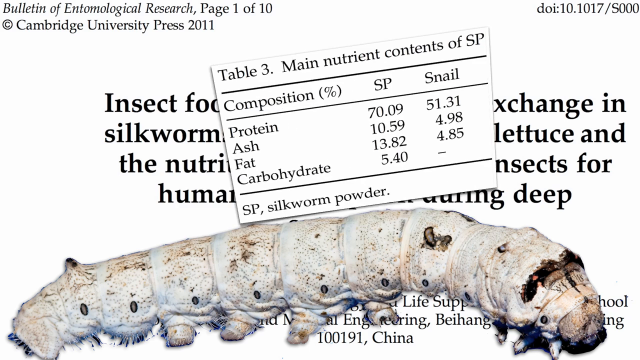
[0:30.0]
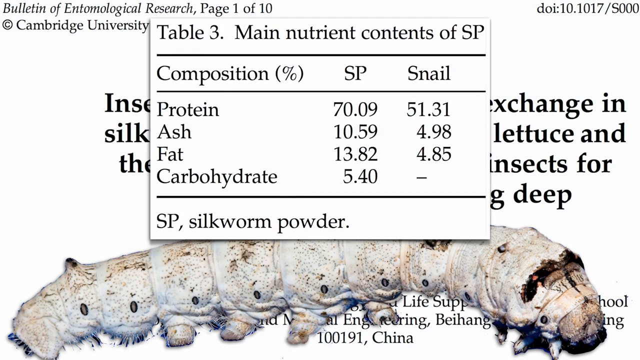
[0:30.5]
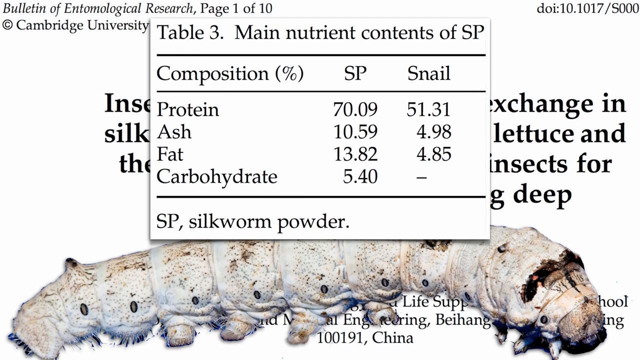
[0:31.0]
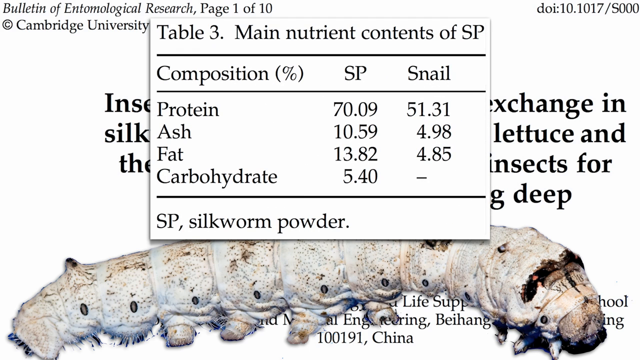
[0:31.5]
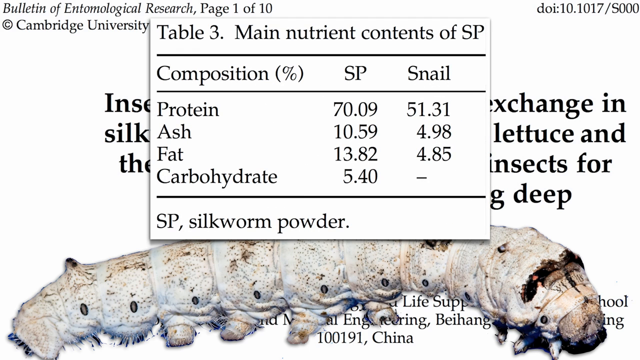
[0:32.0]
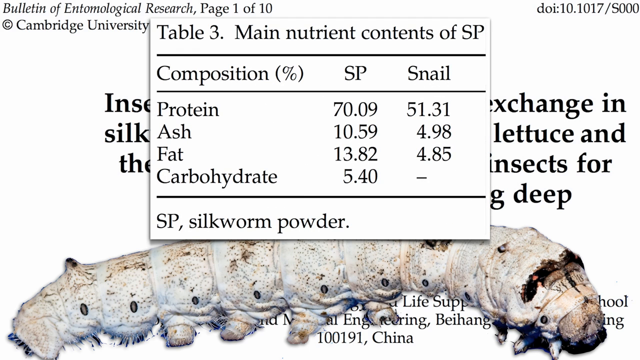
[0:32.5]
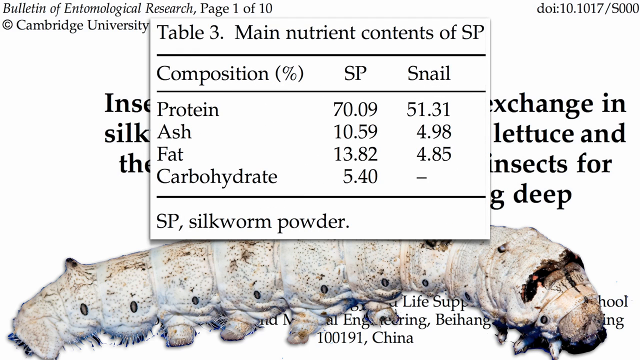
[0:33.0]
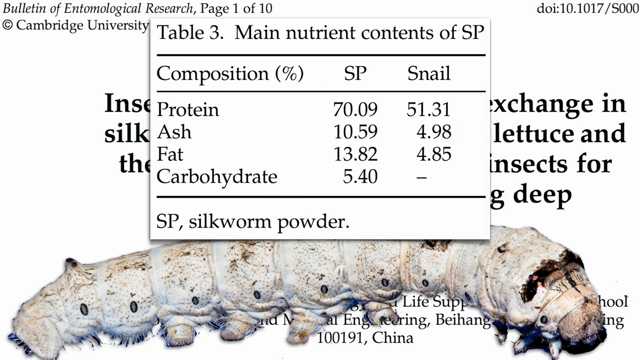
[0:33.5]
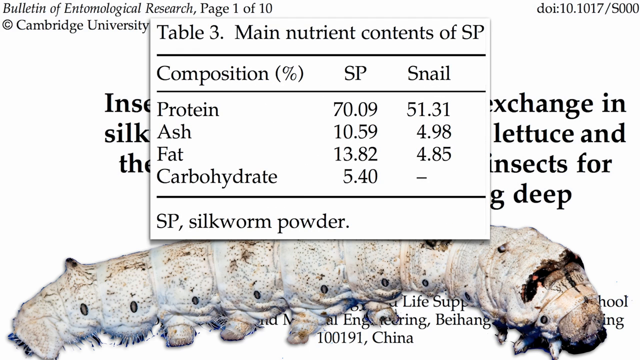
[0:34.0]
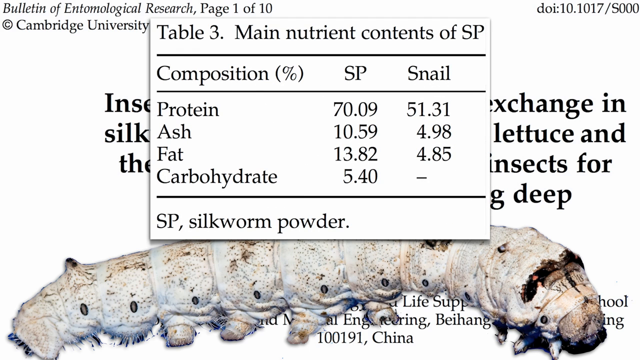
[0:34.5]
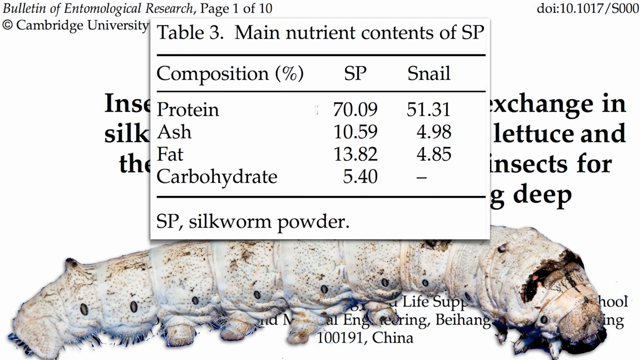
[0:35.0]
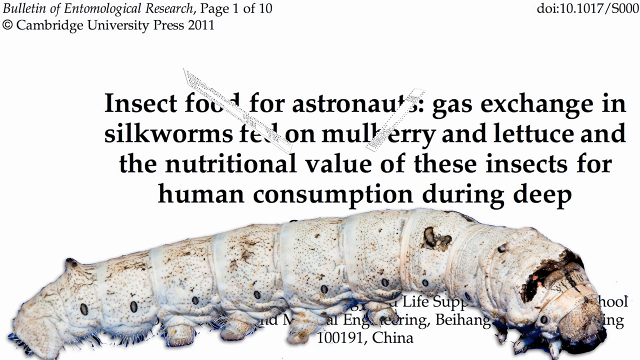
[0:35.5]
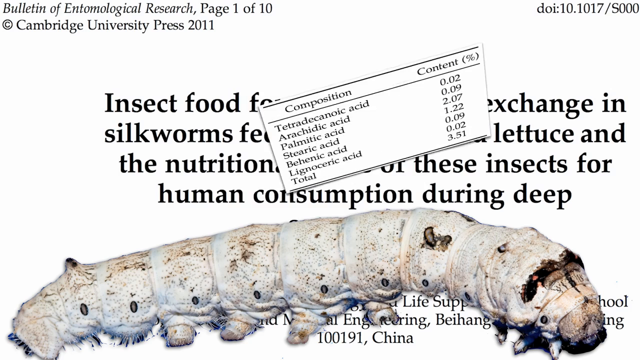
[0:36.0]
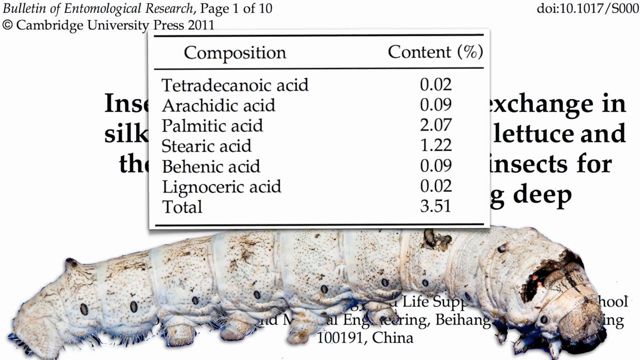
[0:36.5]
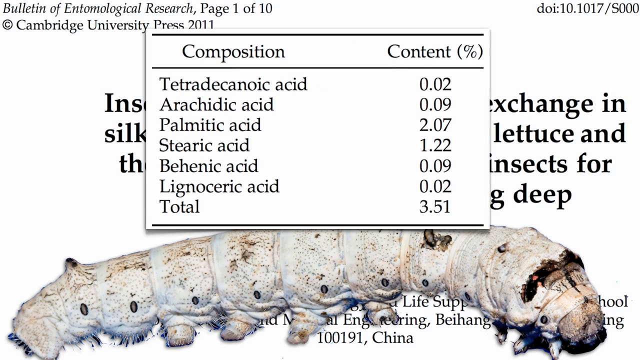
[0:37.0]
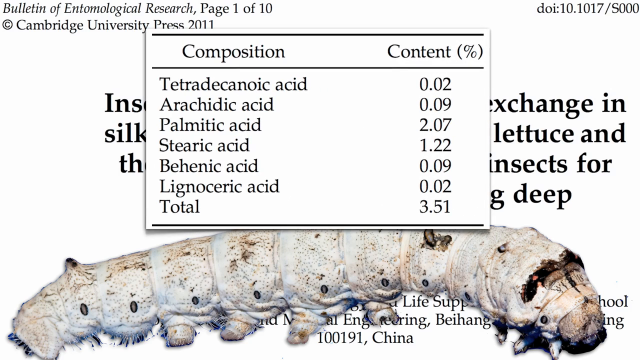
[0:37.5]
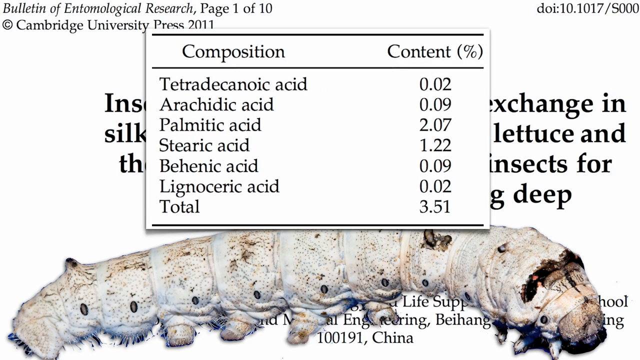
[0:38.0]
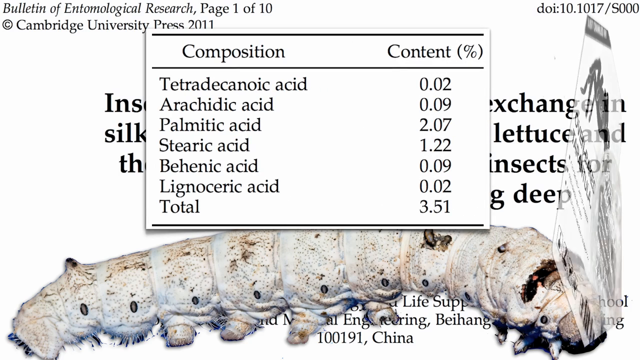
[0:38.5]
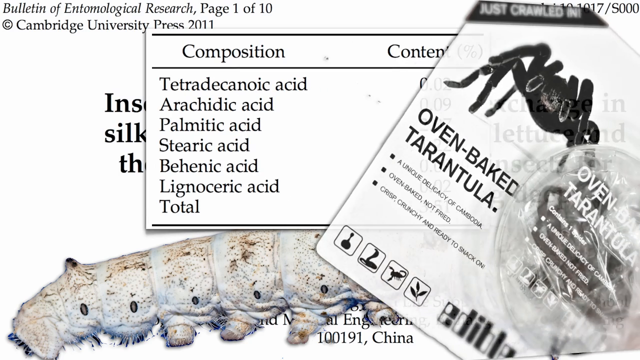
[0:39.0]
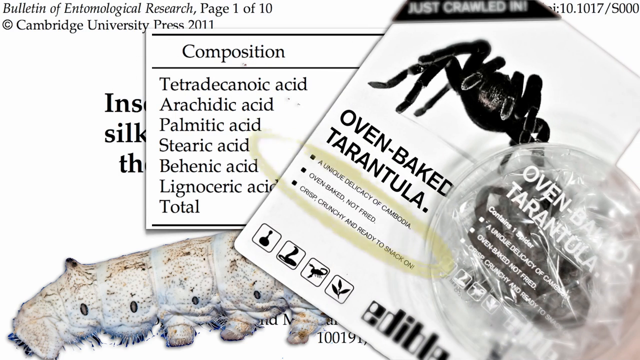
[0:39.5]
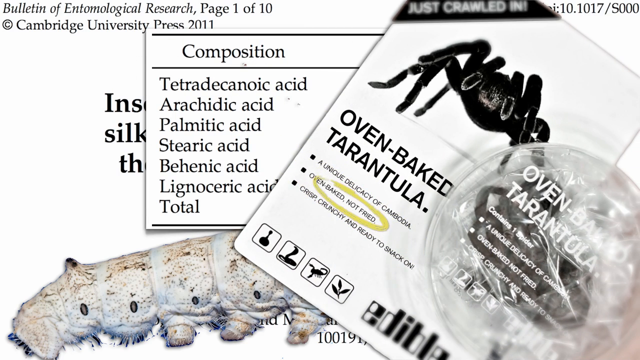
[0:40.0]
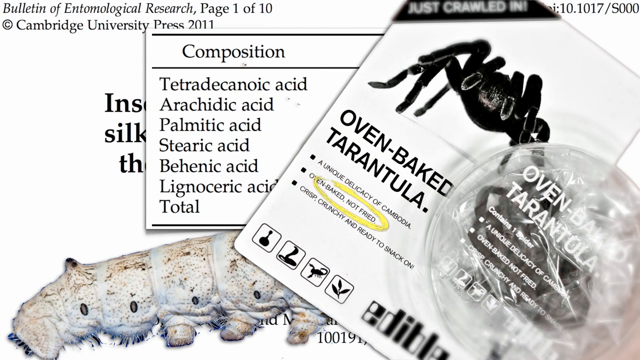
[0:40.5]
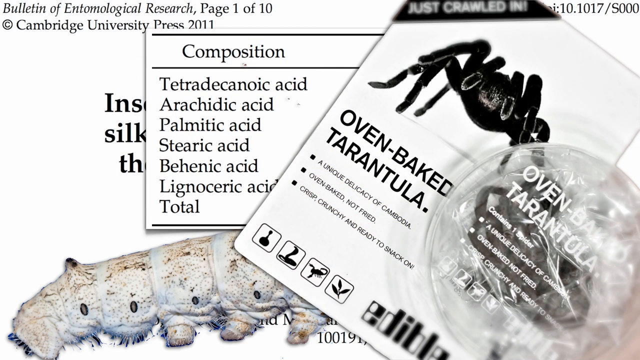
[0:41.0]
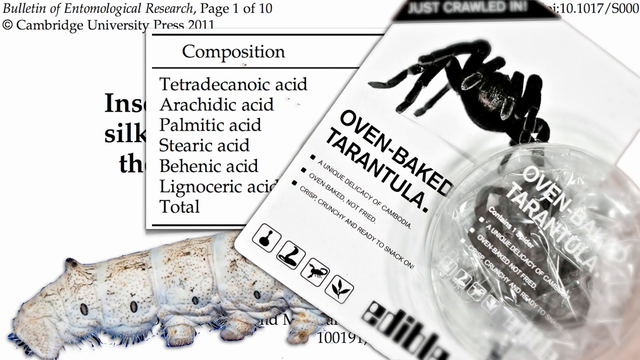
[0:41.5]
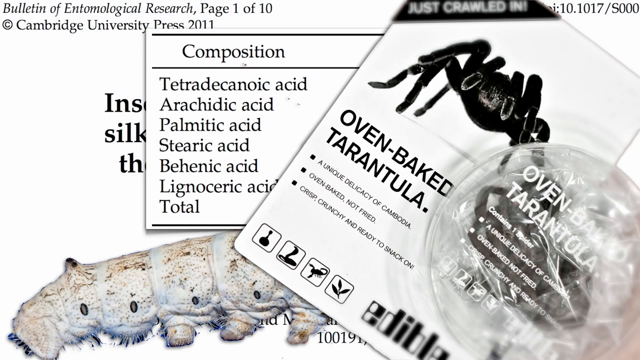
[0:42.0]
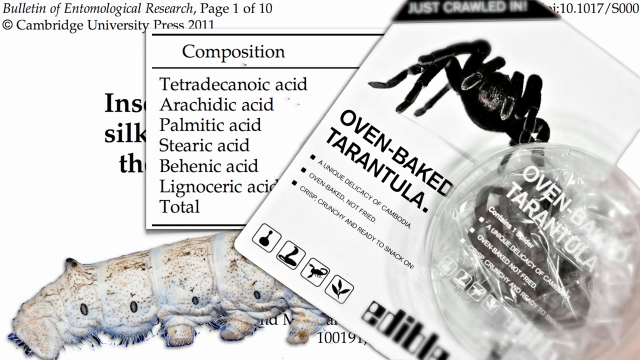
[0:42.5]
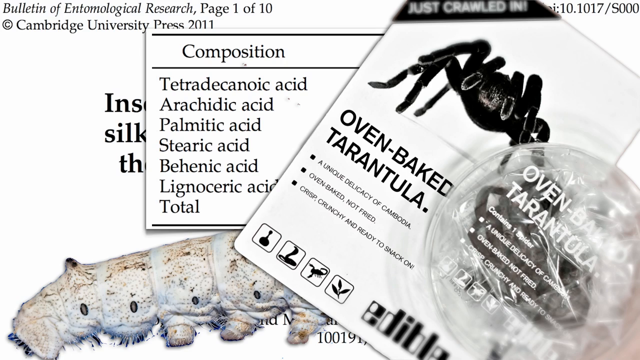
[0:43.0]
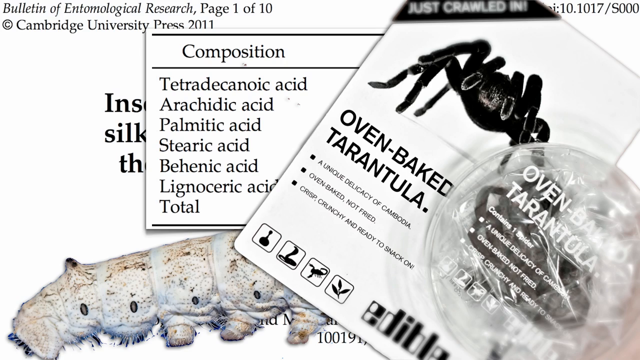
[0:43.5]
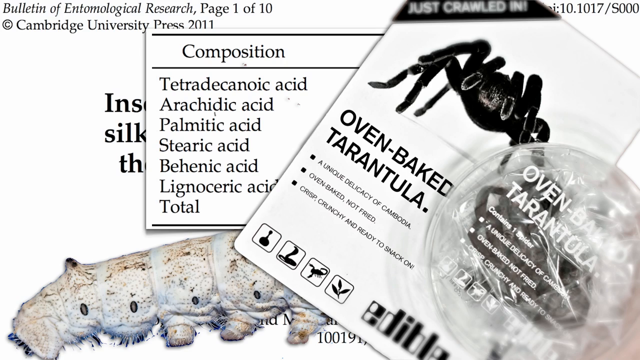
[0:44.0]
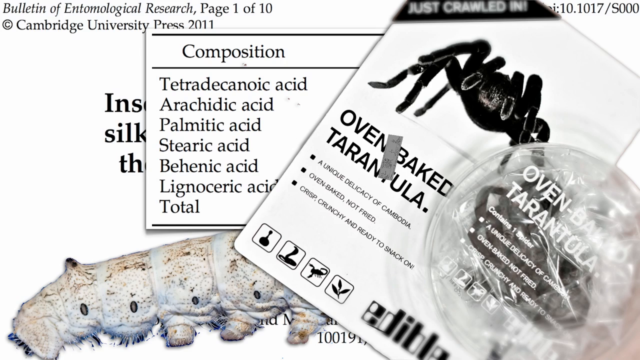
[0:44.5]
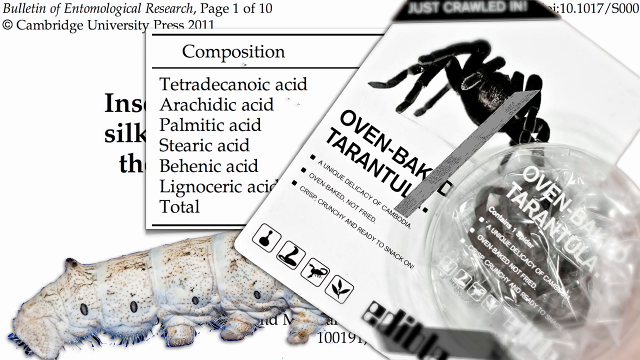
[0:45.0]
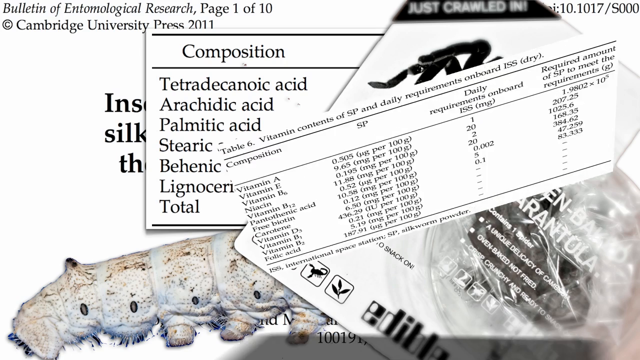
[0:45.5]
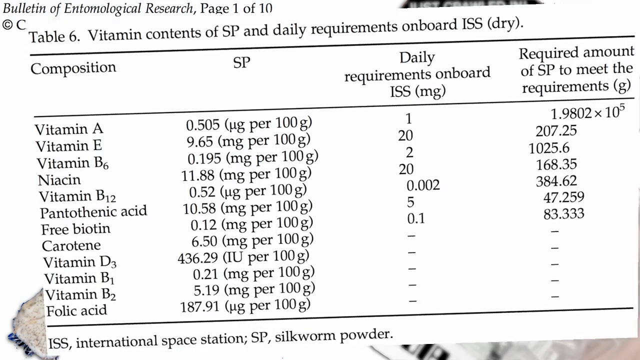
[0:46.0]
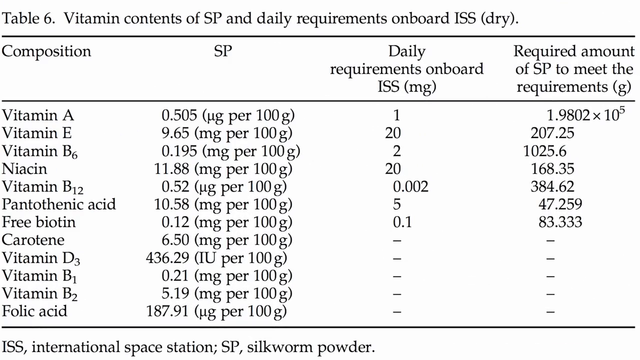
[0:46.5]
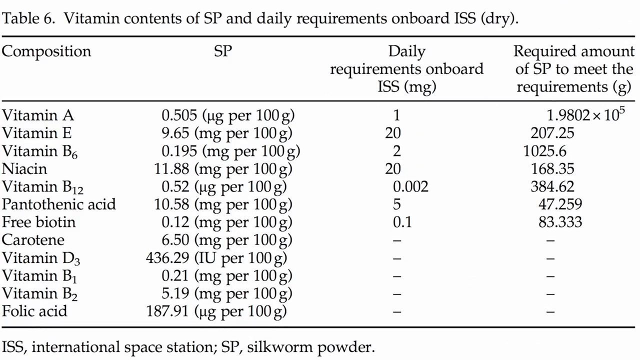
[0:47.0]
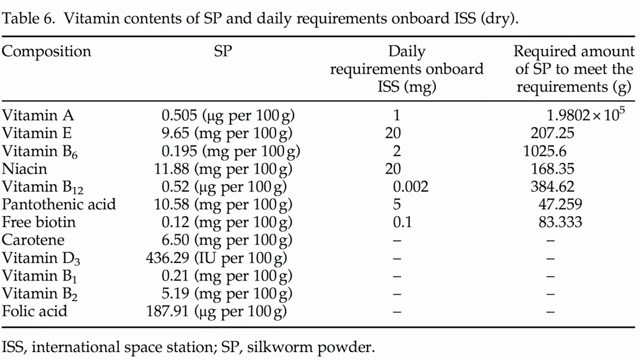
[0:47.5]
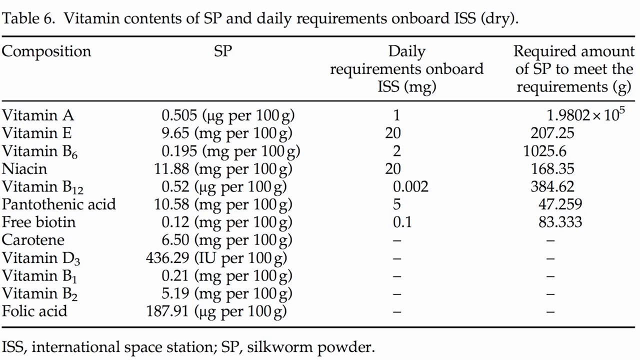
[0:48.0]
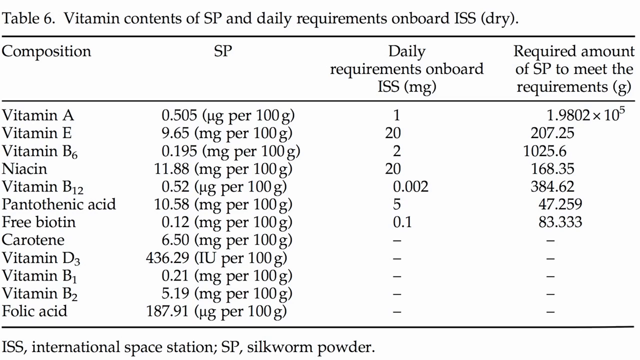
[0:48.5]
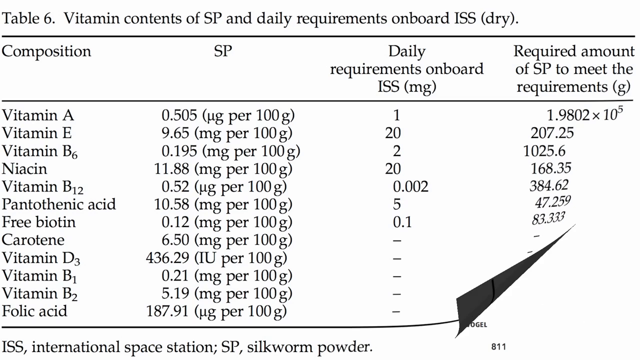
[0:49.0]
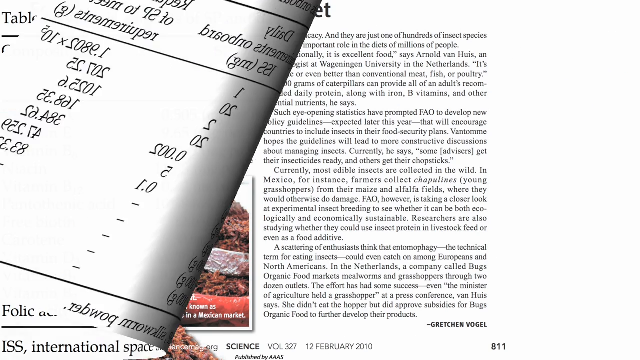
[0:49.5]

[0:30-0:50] The white background with text remains, with the white grub worm across the bottom, its head on the right side, stretching all the way across the page. A square comes up in the center with black text across the top reading "Table 3, Main Nutrient Contents of SP." Below that, a column on the left side is headed "composition," and going right are columns for "SP" and "snail." Below composition are protein, ash, fat and carbohydrates, with numbers under SP and snail. At the bottom it says "SP, silkworm powder." That goes off the screen and another table comes up with "composition" in the top left and "content percentage" in the top right; below it is a list of six different types of acid, with percentages down the right side and a total at the bottom left. Another one comes in from the right, somewhat angled. A tarantula is on the top left side, angled up toward the right, with information underneath it: a small piece of plastic labeled "oven baked tarantula" with a baked tarantula inside. Another one then comes up taking the whole page, up to table six, with more information about proteins and vitamins in the SP, and then it peels off to the left.